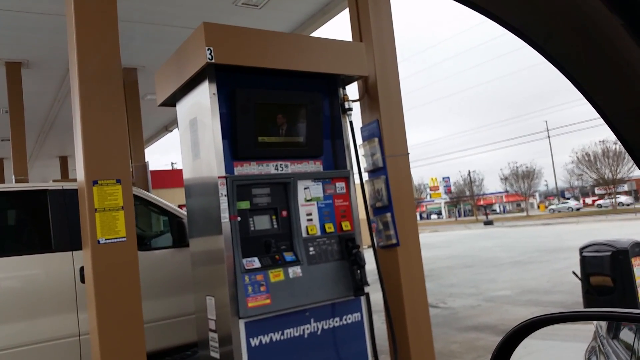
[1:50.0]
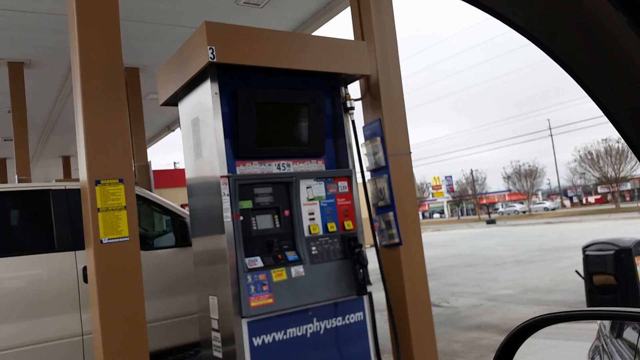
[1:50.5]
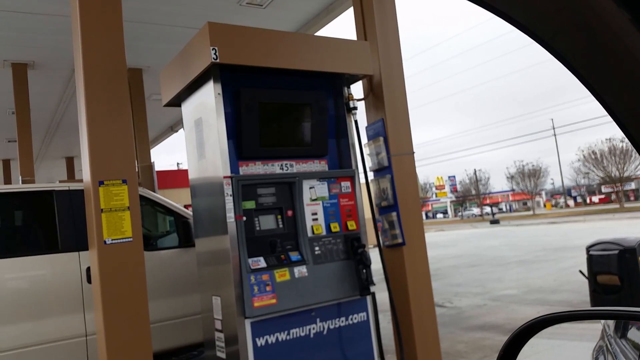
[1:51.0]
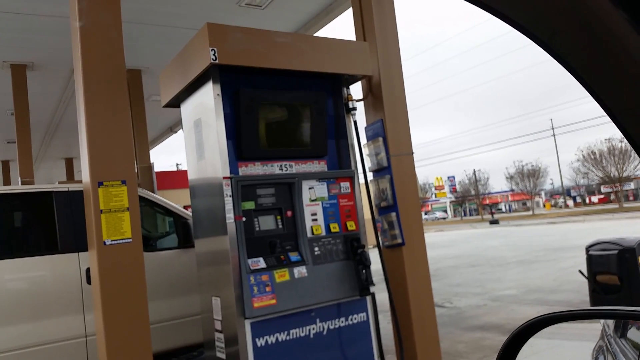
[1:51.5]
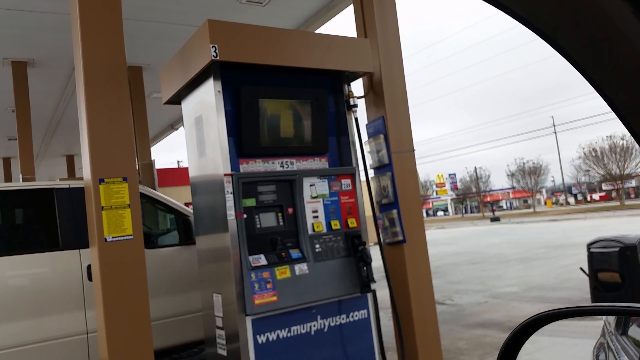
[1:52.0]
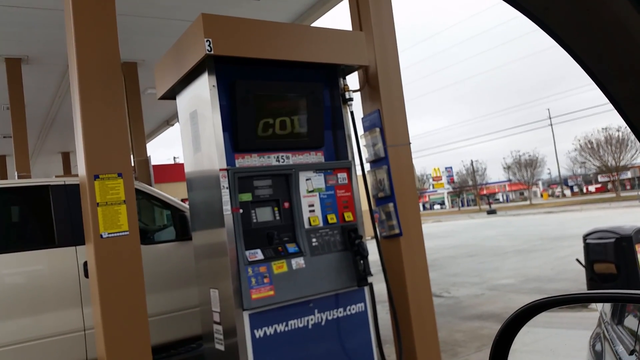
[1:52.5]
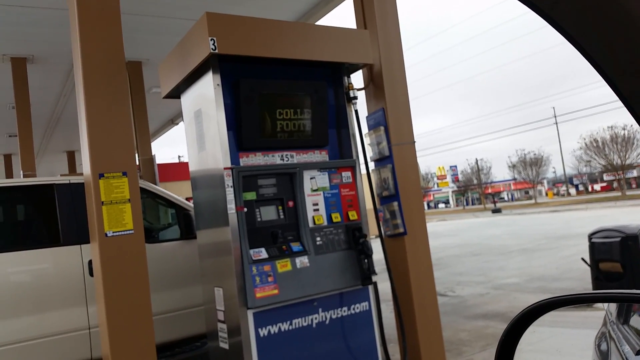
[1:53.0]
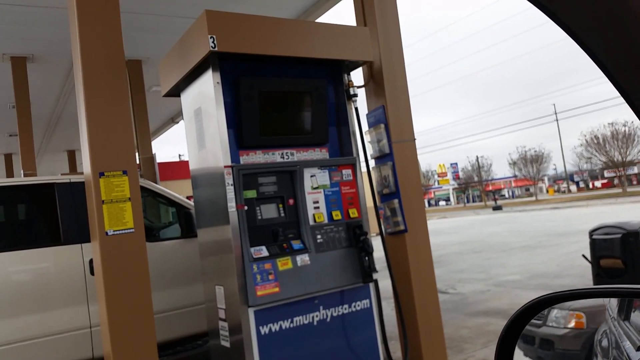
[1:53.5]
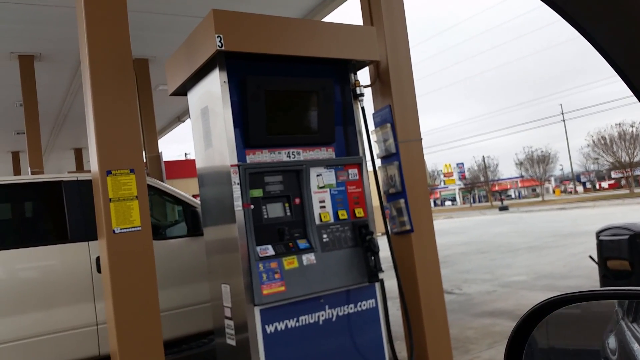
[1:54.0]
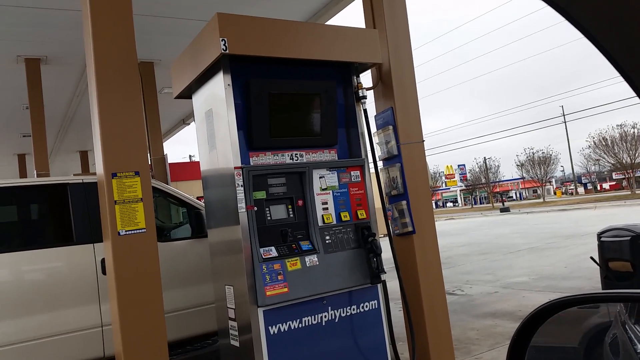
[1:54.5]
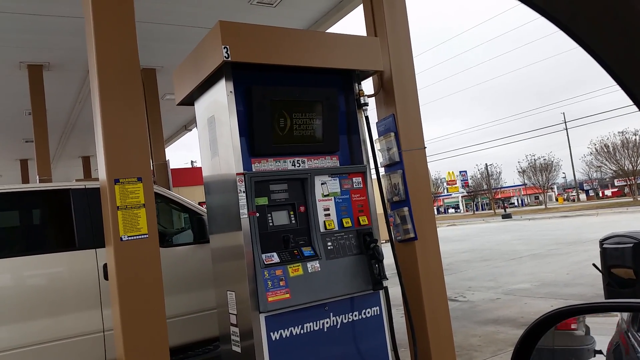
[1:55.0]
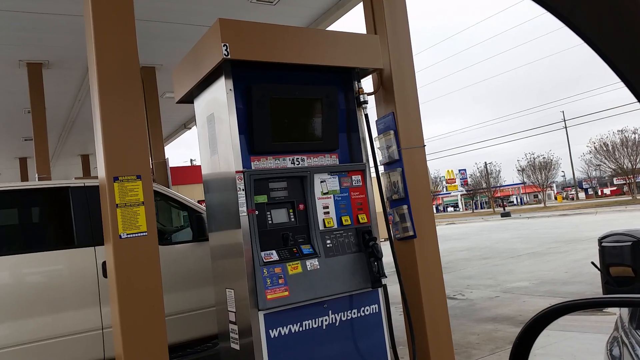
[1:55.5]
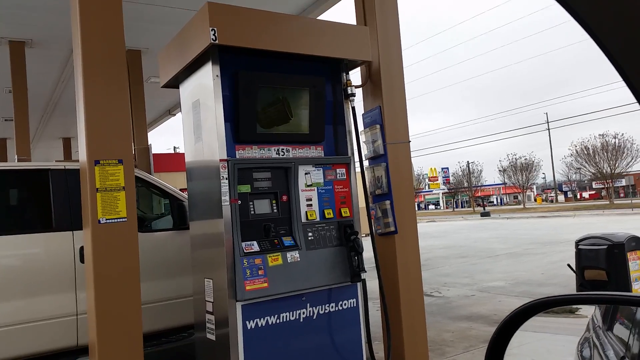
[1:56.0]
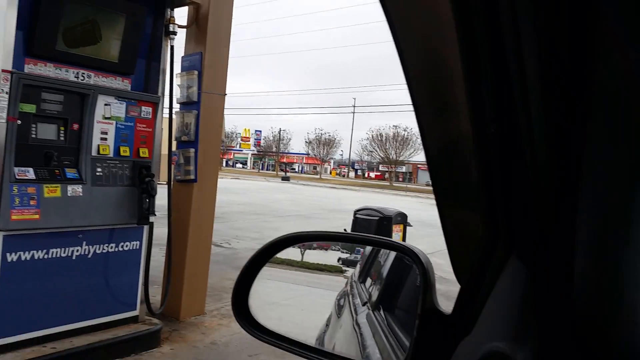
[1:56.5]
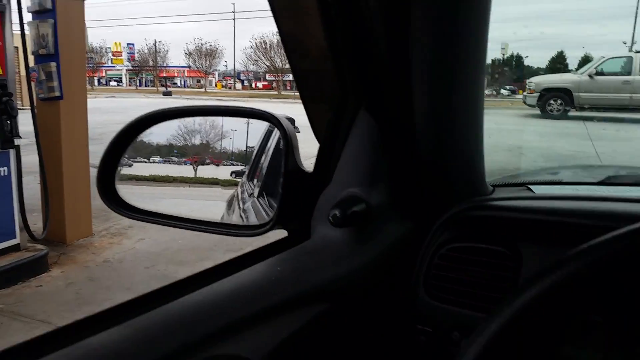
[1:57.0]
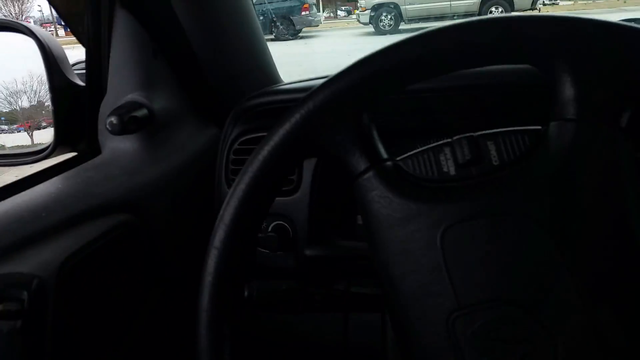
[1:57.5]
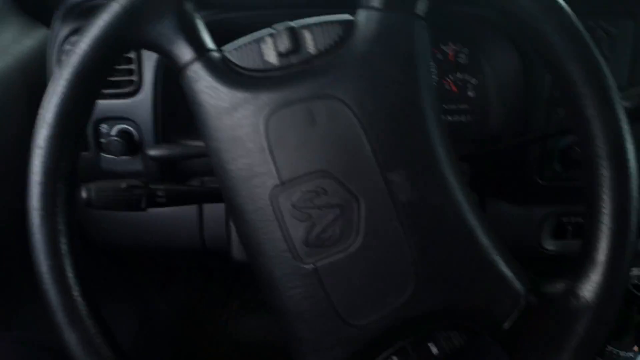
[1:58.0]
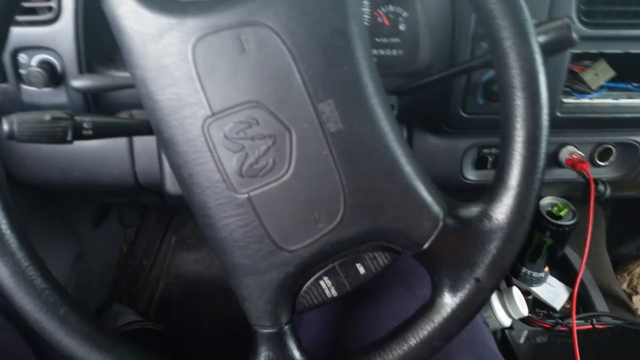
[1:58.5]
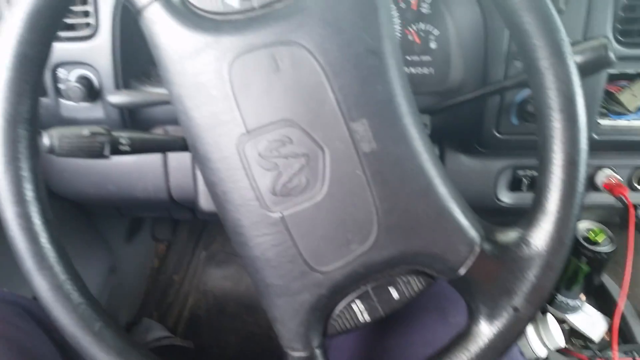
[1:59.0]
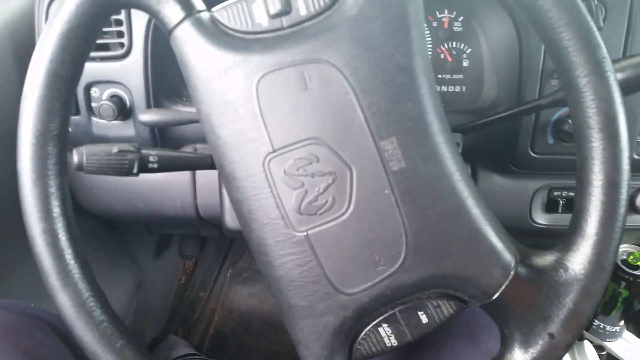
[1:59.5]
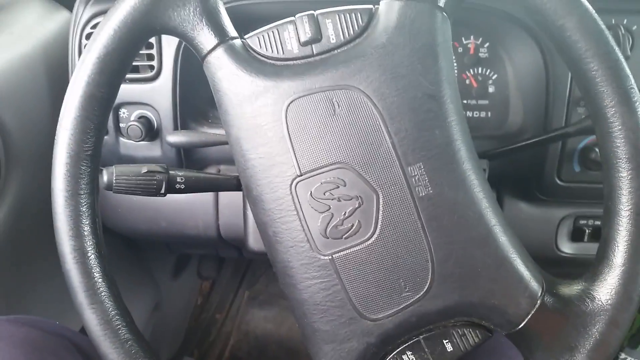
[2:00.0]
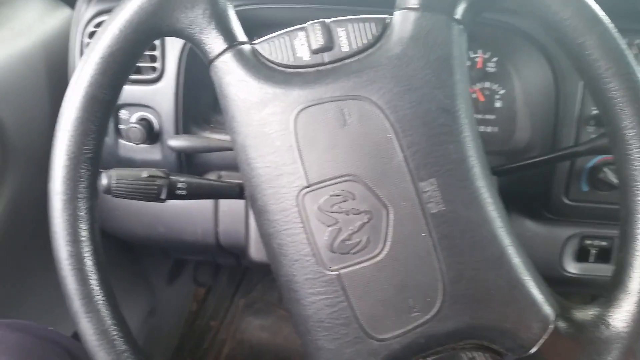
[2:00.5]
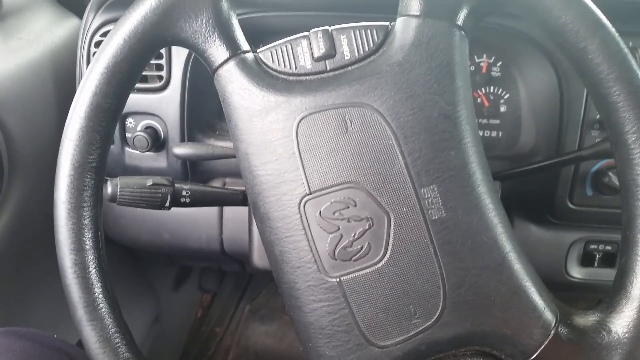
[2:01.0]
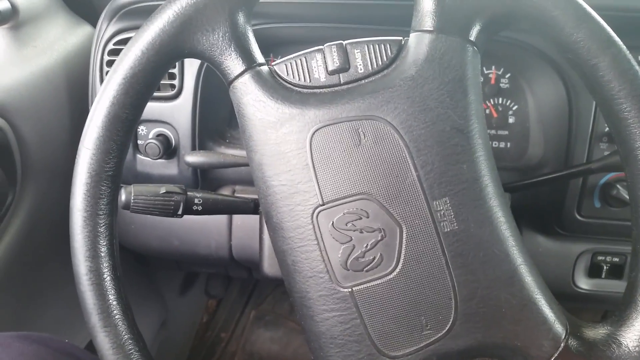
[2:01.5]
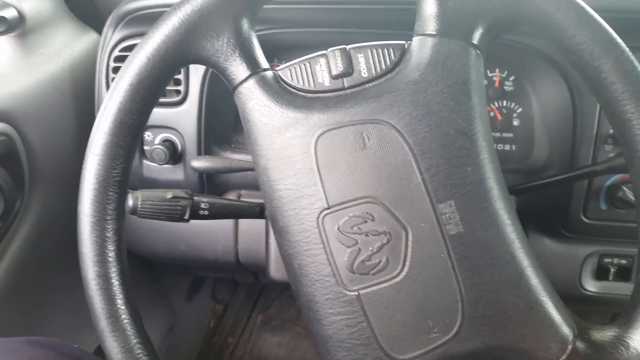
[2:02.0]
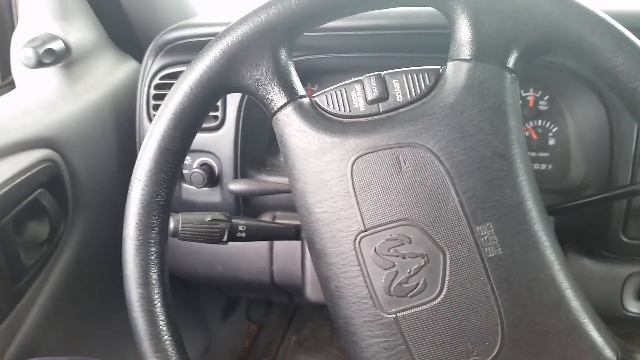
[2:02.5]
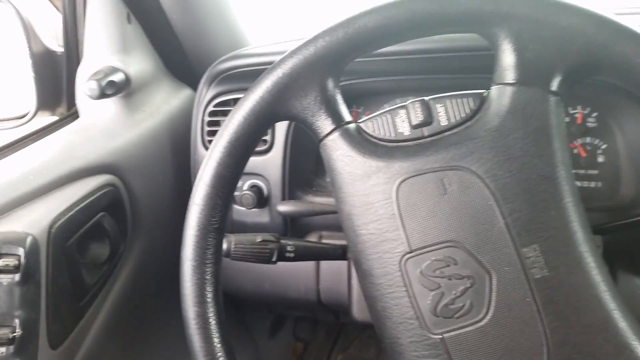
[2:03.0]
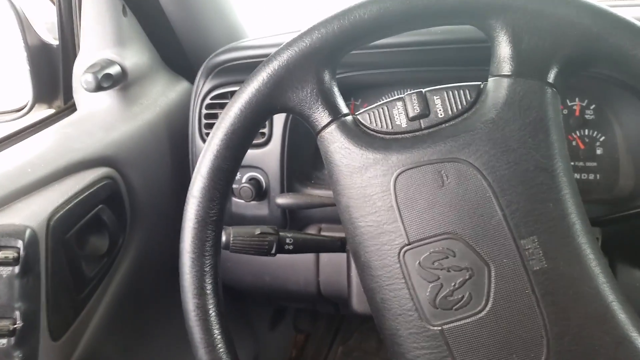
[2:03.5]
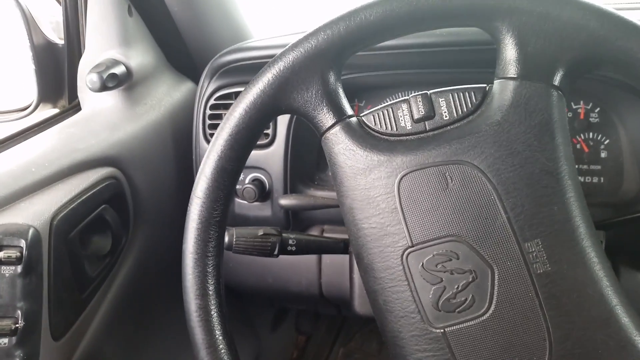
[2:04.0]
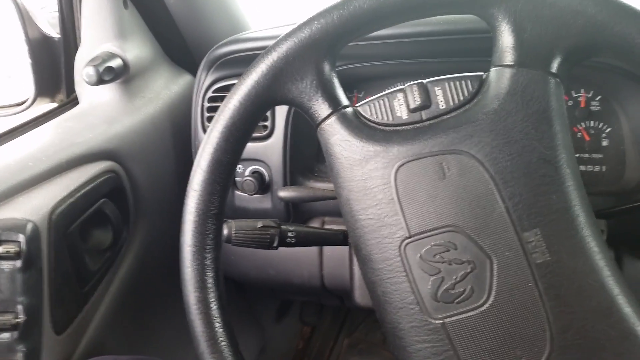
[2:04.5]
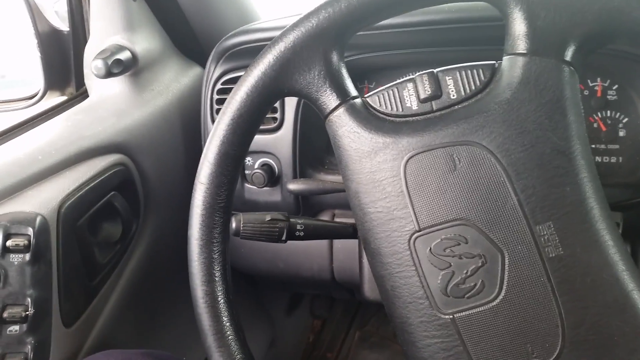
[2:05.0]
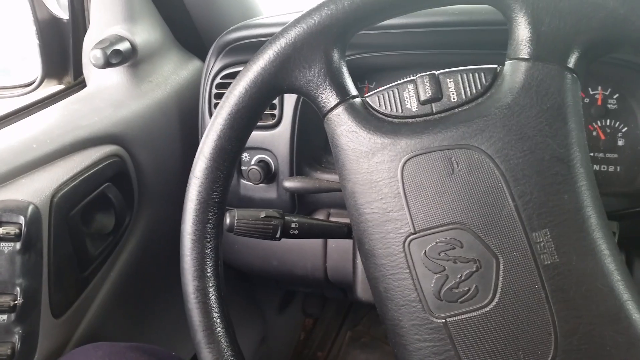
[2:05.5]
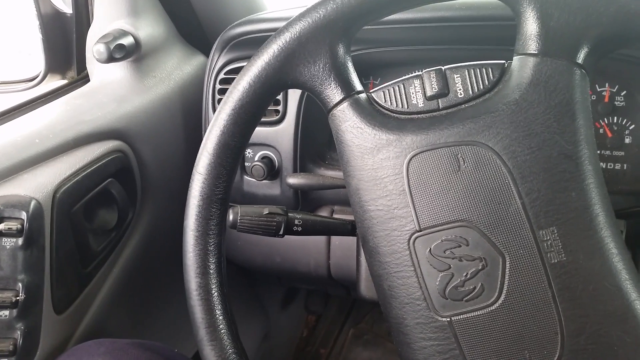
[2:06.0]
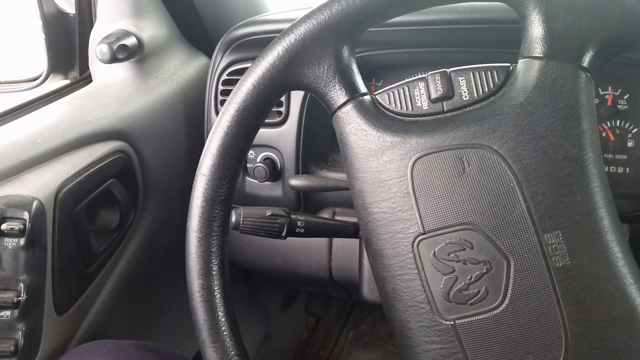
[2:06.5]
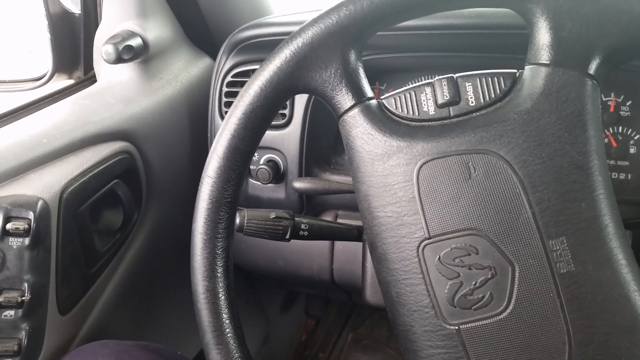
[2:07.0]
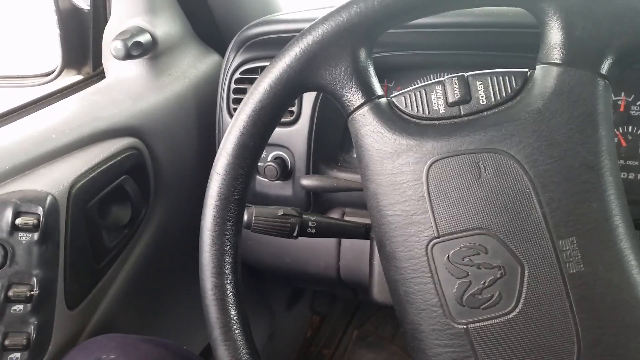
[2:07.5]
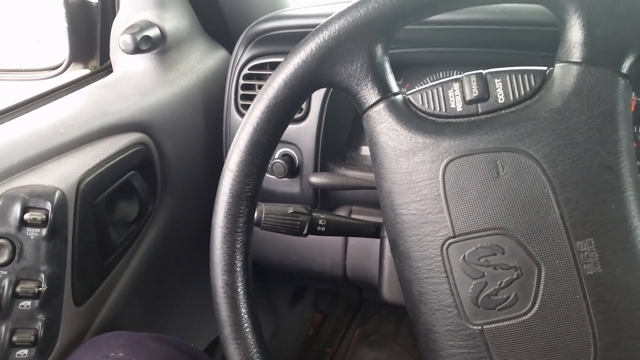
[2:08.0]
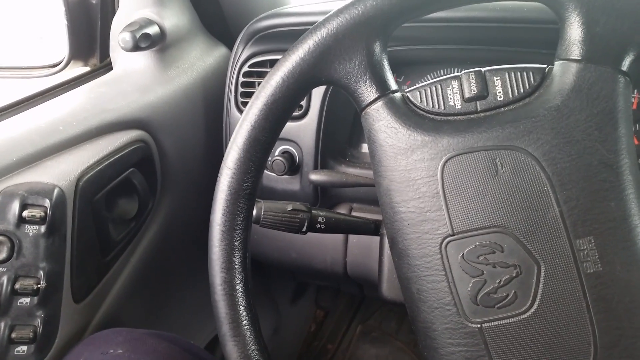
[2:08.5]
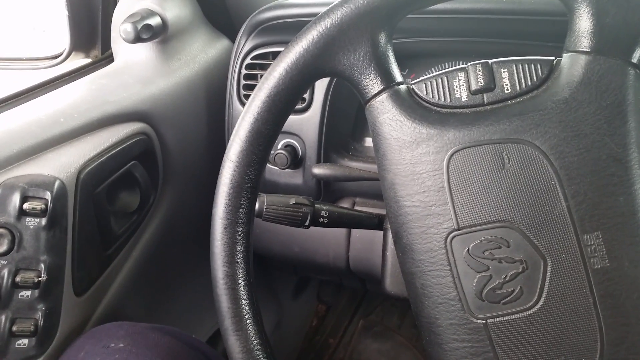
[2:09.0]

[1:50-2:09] The camera is still focused on the pump's screen, where a small graphic for college football comes up on the news program. Then part of the driver is visible, along with the steering wheel, which is turned to the left, black leather or faux leather, with a Dodge Ram emblem in its center. The interior's hard plastic is either black or deep gray. The camera goes from the screen back into the interior, catching a glimpse of the device with the knobs, which is plugged into the power outlet on the dashboard.